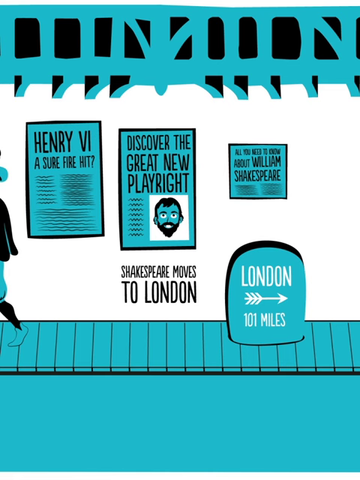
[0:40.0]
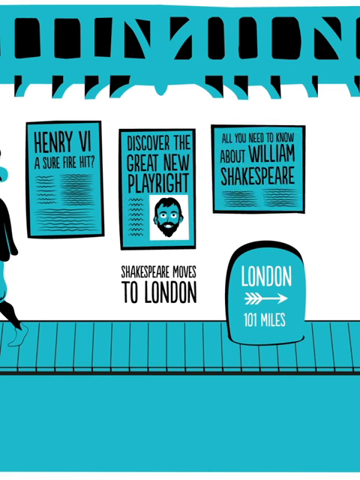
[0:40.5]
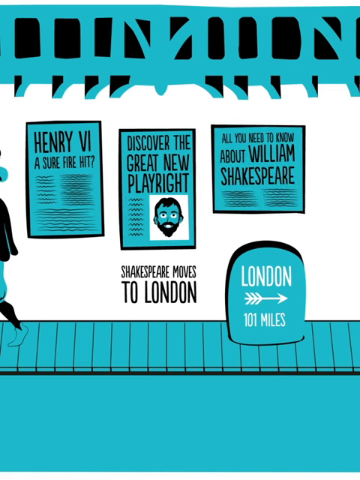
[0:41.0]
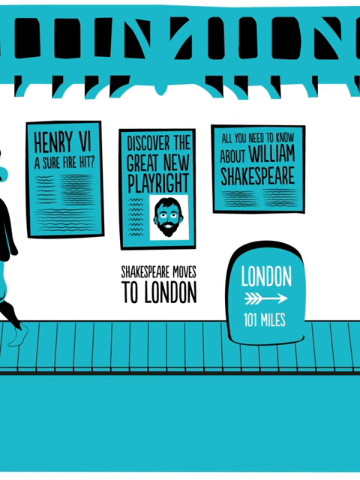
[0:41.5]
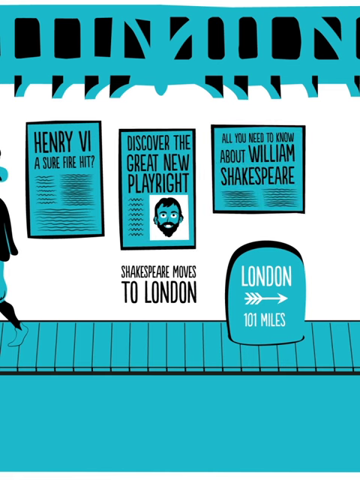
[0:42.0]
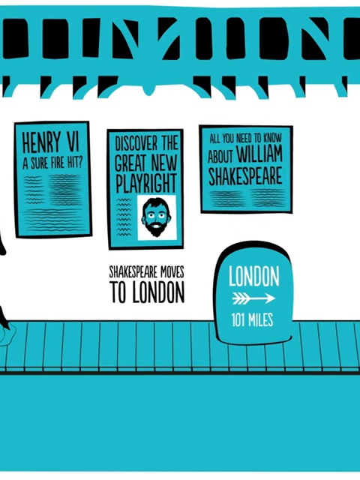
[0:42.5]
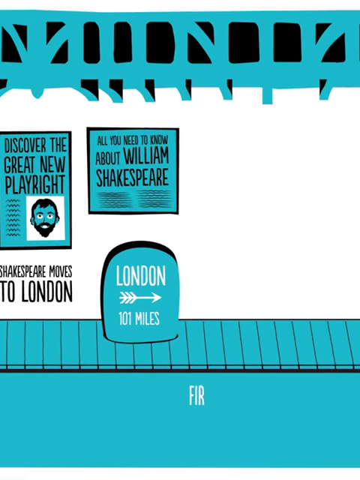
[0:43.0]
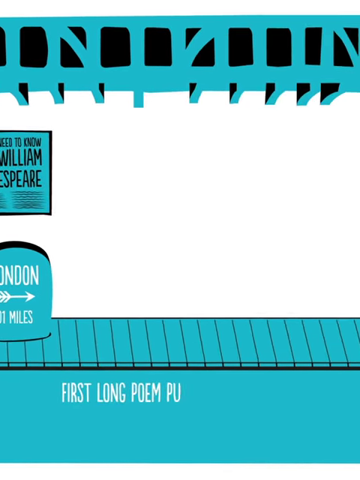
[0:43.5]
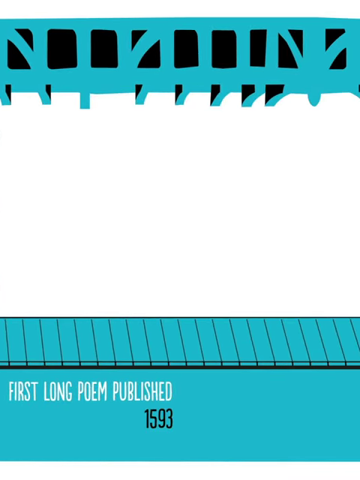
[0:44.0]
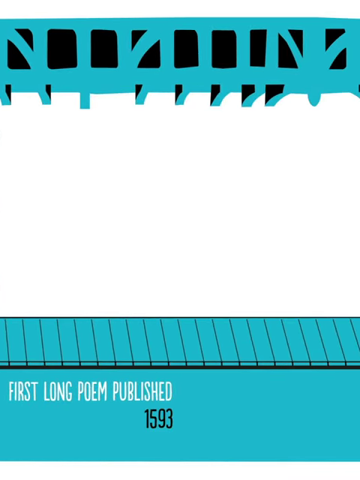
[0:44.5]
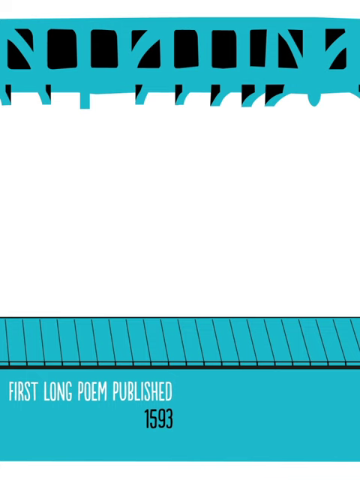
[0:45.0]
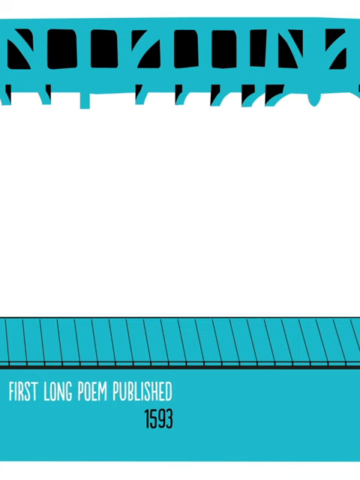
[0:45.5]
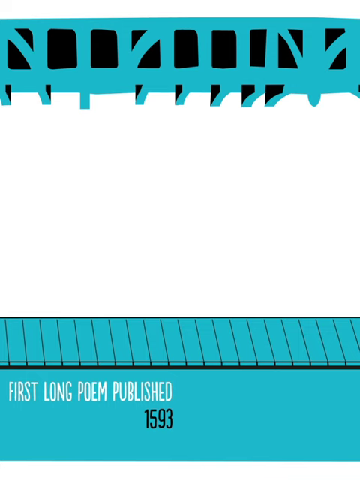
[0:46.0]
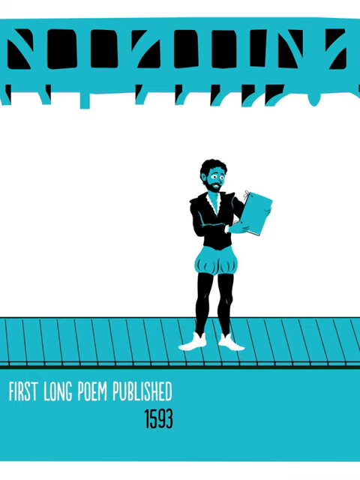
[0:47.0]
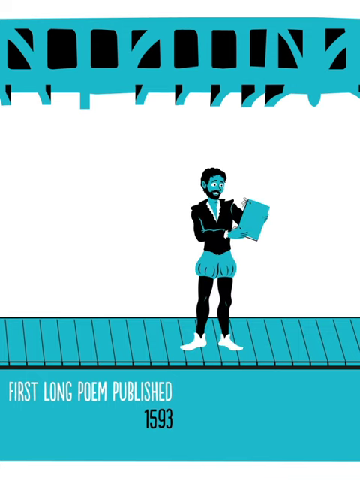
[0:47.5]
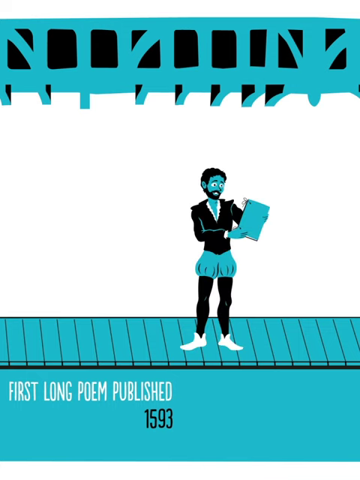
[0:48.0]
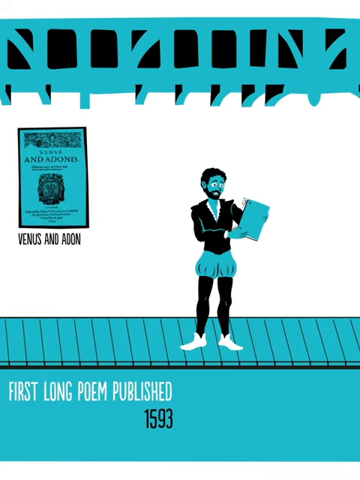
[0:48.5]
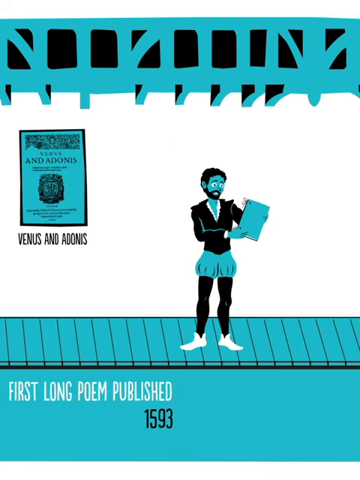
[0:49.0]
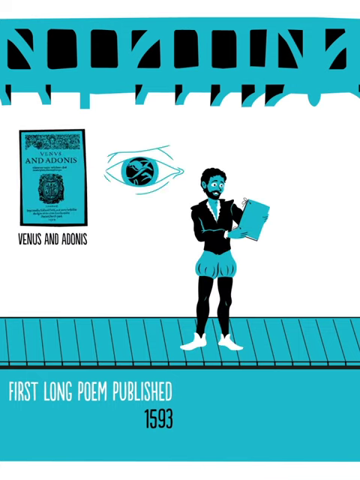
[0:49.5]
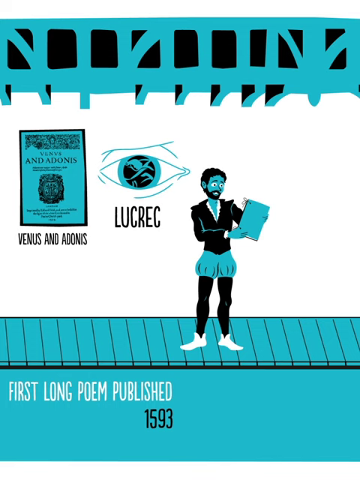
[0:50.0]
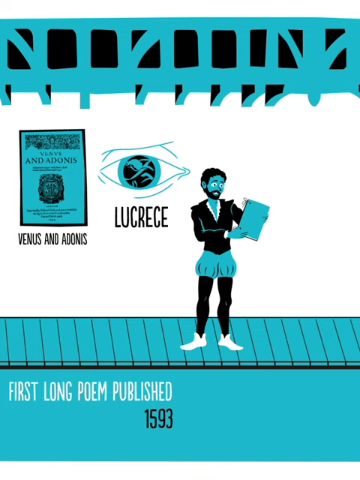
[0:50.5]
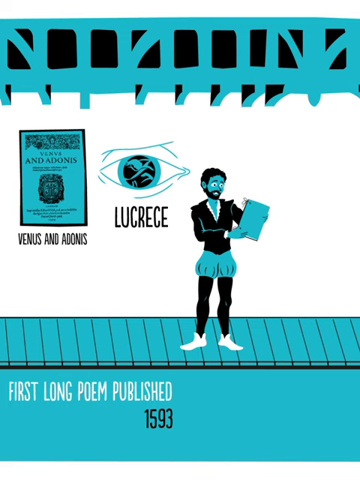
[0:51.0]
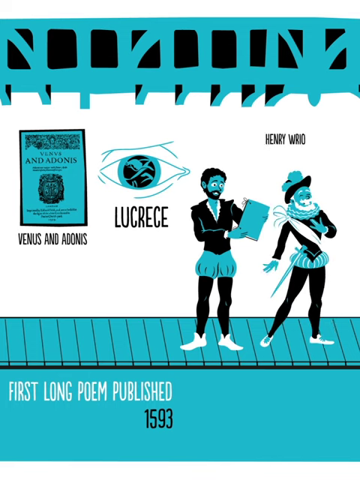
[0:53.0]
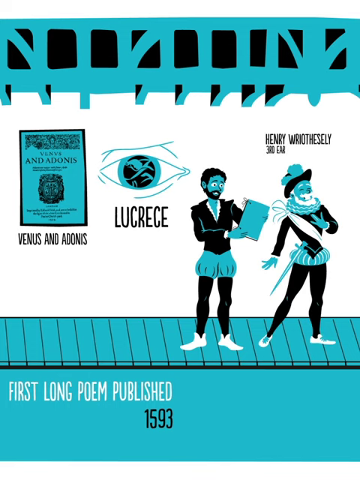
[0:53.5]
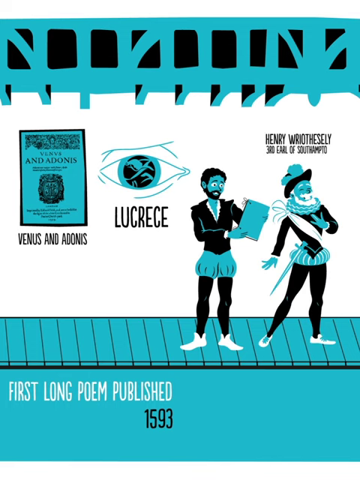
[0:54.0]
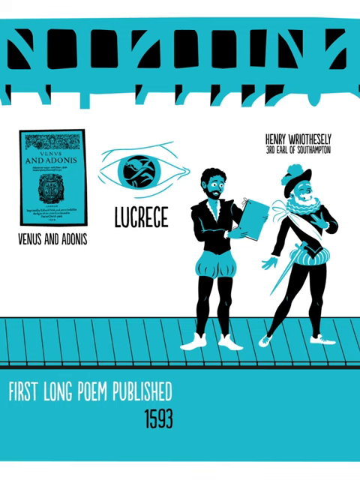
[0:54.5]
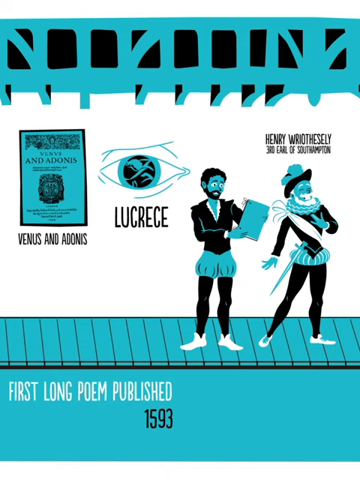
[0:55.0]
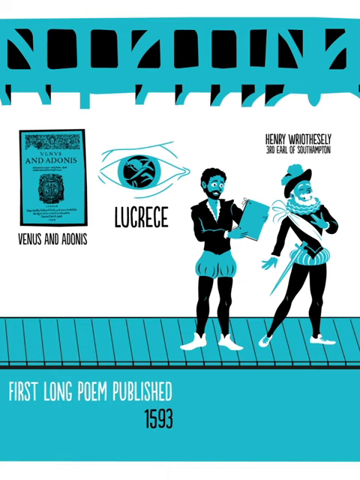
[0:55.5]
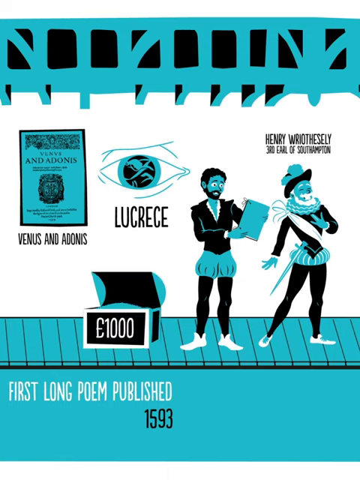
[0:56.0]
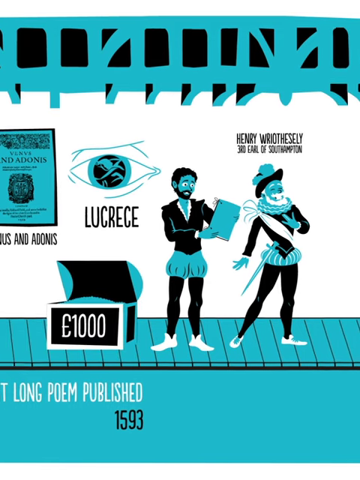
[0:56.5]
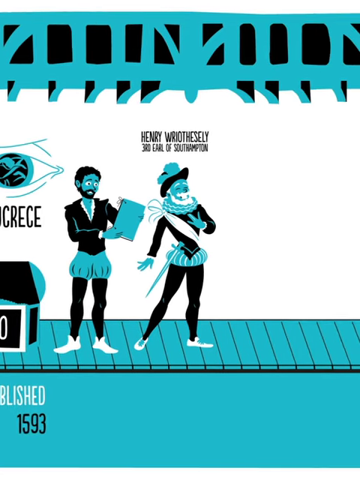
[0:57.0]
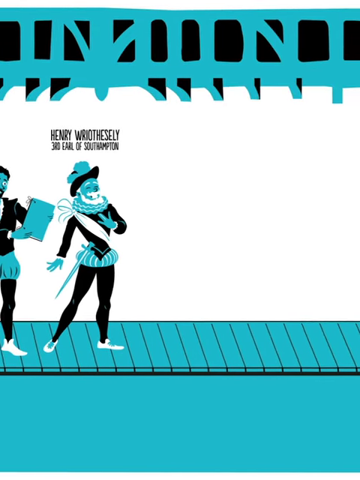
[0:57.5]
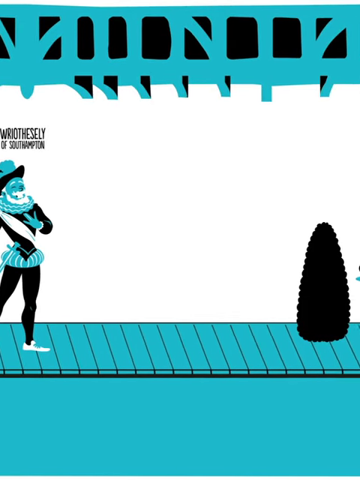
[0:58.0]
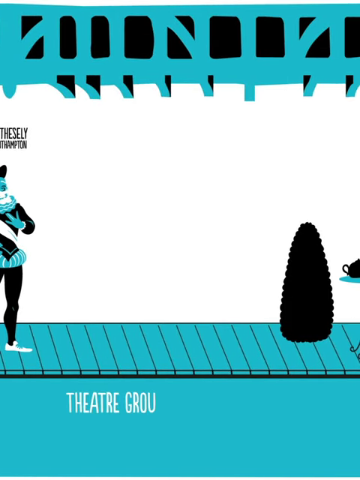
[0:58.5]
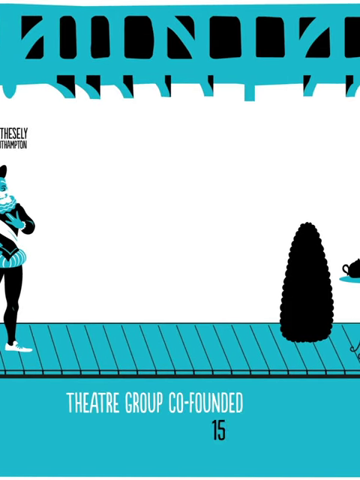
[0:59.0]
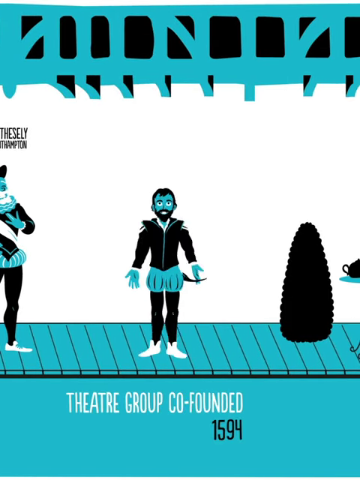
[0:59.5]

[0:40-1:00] This animated short shows moments from the life of William Shakespeare as small scenes moving across a stage. It opens on a mile marker that says "London" with an arrow pointing to the right and the words "101 miles" below it. On the wall behind it are the words "Shakespeare Moves to London" and three posters that look like the front pages of newspapers, with headlines reading "Discover the great new playwright" and "Henry VI A Sure Fire Hit?" The screen moves to the right, and text appears at the bottom of the stage: "First Long Poem Published 1593." Above it, a graphic shows a man in Renaissance-style clothing holding a piece of paper in front of him. Behind him on the left, images appear above the names of poems: "Venus and Adonis" below an image that looks like the title page of a book, and "Lucrece" below a graphic that looks like a stylized eye. Another man then appears next to him, also in Renaissance clothing, with a ruffled collar, a hat with a big feather, and a sword attached at the hip. Text above him reads "Henry Wroithesley, 3rd Earl of Southampton." A chest with an open lid appears next to the first man, with 1,000 pounds shown on its side. The camera moves to the right again, and the words "Theatre Group, Co-Founded, 1594" appear on the front of the stage.